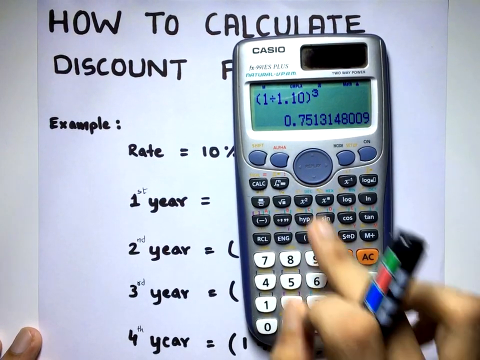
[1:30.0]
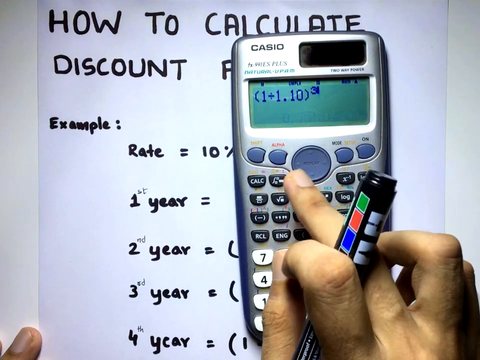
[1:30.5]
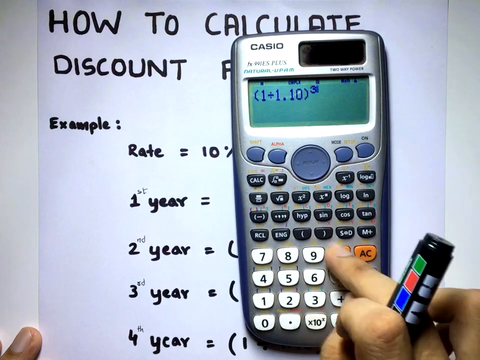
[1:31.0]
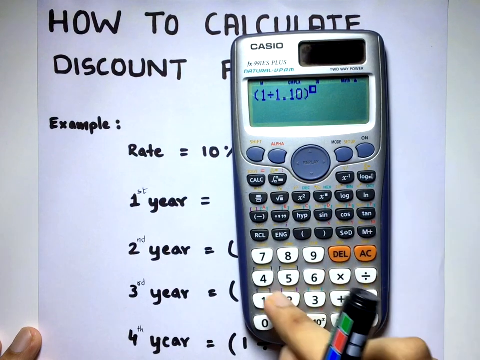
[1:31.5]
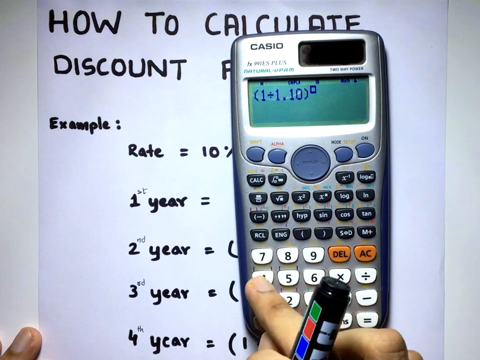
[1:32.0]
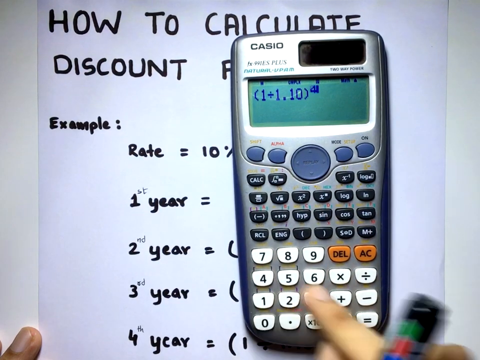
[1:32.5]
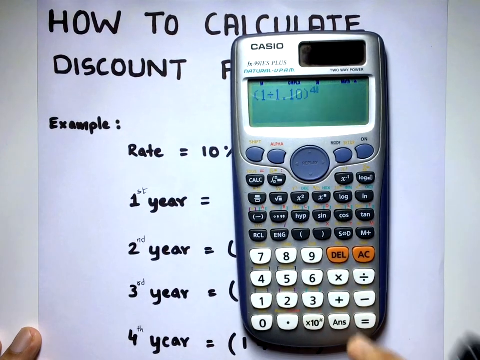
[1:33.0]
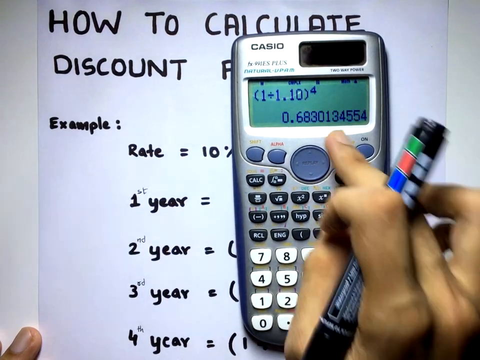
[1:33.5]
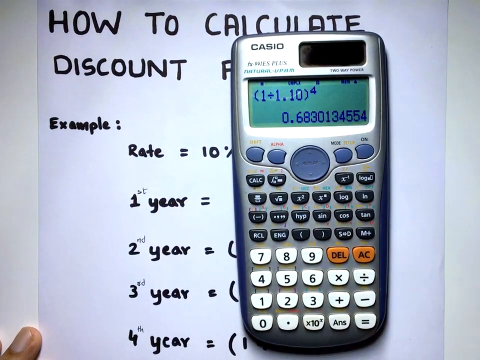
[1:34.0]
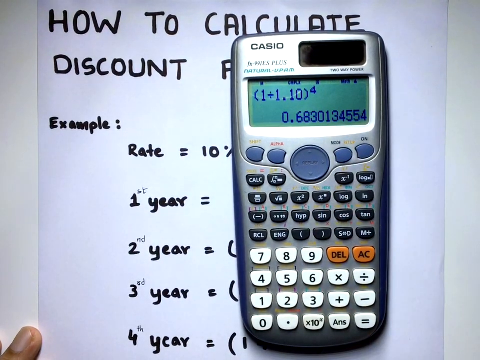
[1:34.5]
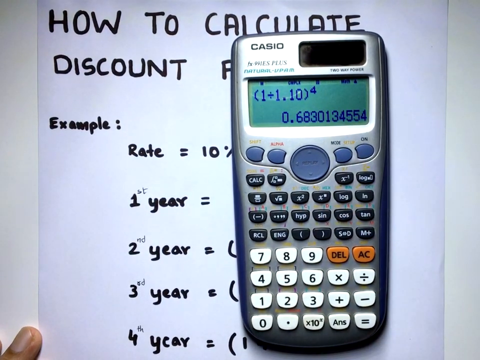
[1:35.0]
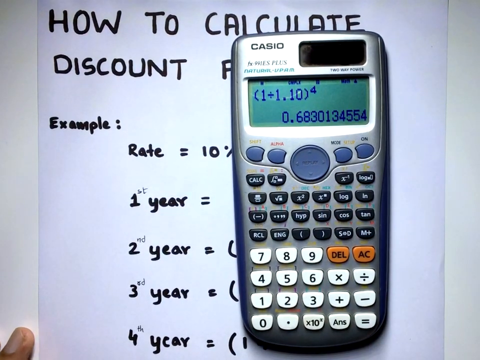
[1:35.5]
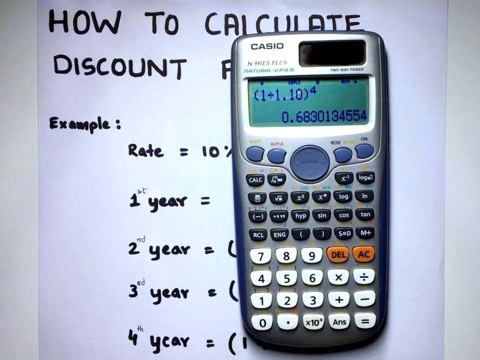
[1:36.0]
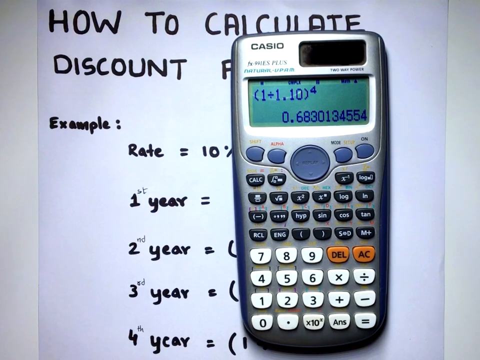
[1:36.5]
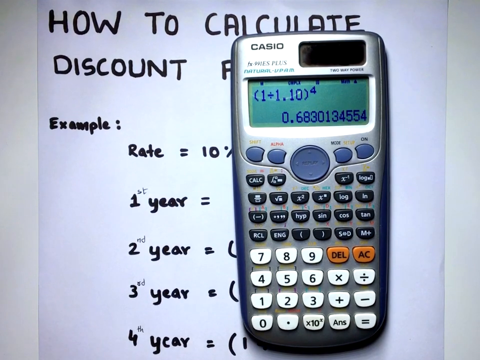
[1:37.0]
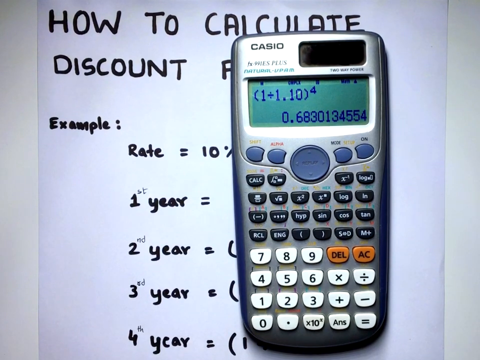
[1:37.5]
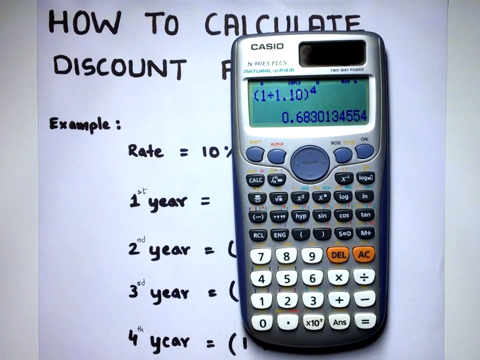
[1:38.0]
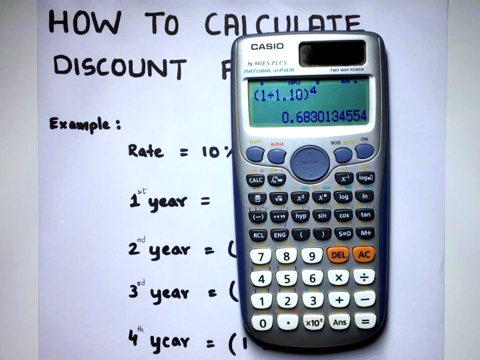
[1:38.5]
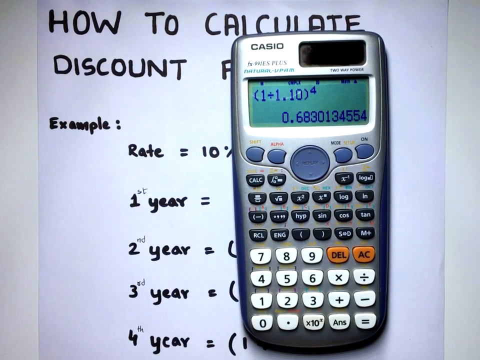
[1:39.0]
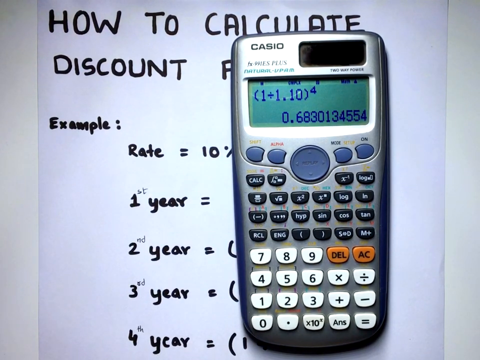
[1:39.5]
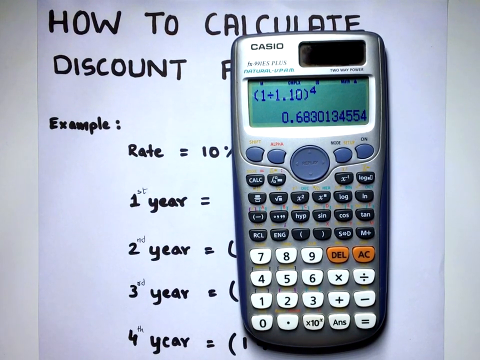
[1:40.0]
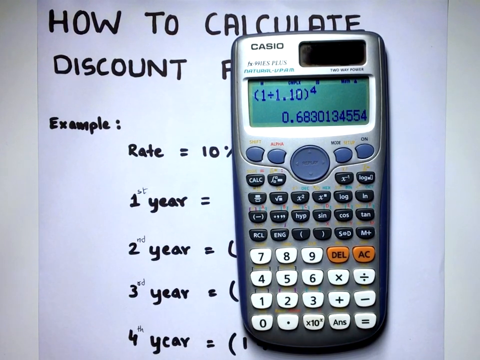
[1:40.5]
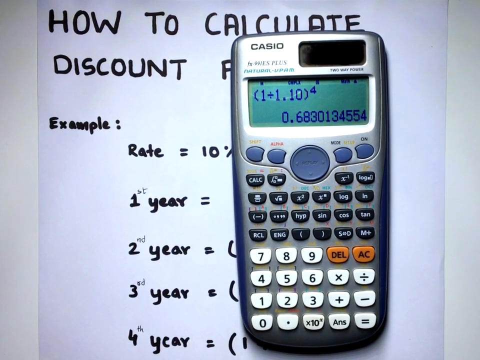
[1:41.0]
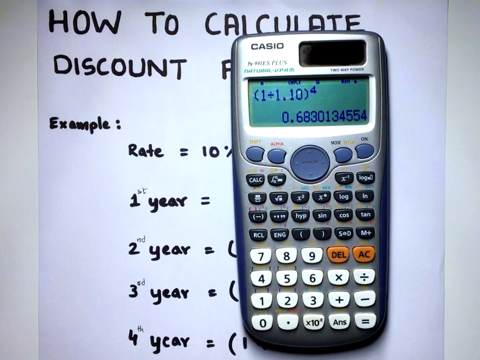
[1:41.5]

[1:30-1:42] He changes the year in the equation up to four, presses enter with his finger on the calculator, and gets the answer 0.683 for the example. This seems to show how a 10% discount is reflected over a four-year period. As he presses equals on the calculator, it raises the equation by one year each time.